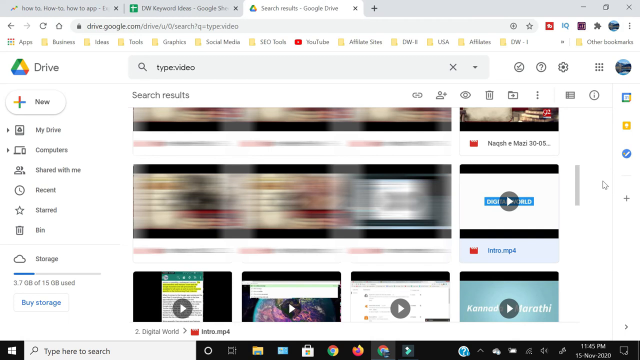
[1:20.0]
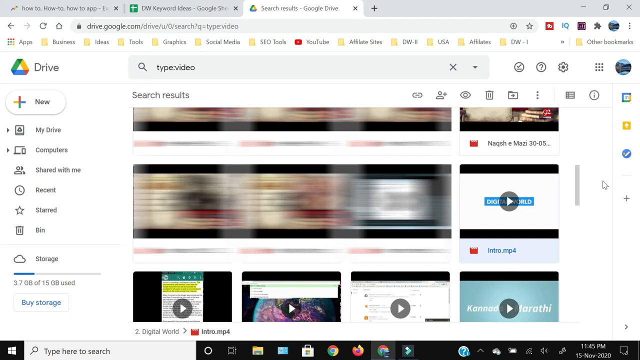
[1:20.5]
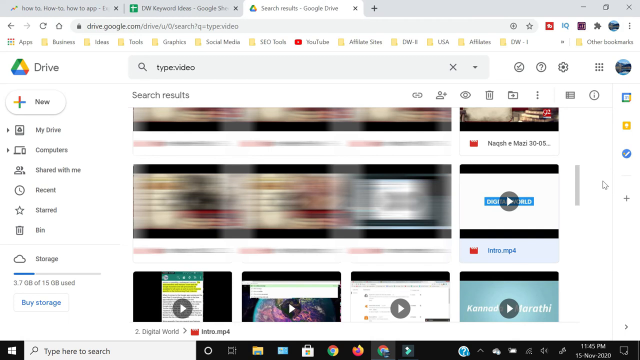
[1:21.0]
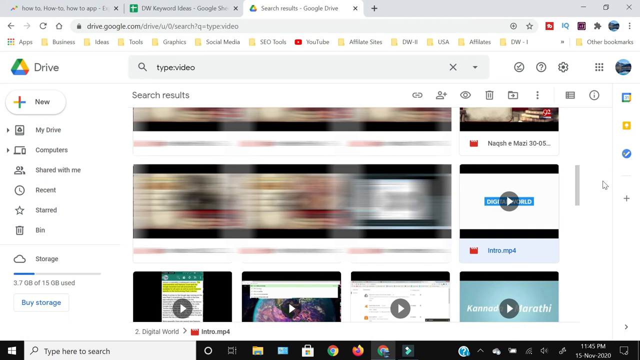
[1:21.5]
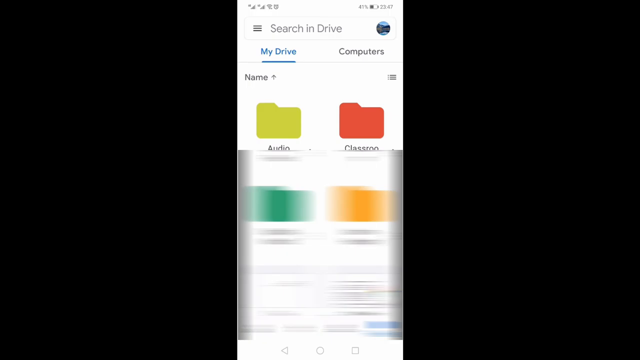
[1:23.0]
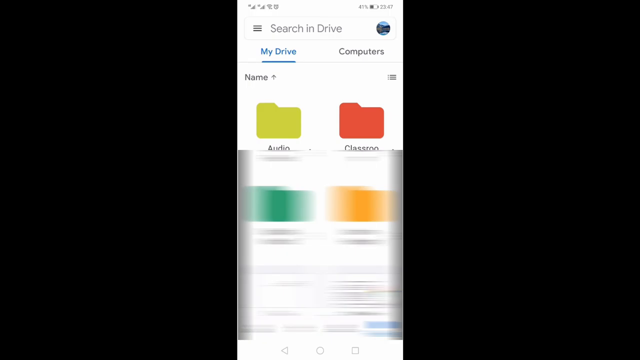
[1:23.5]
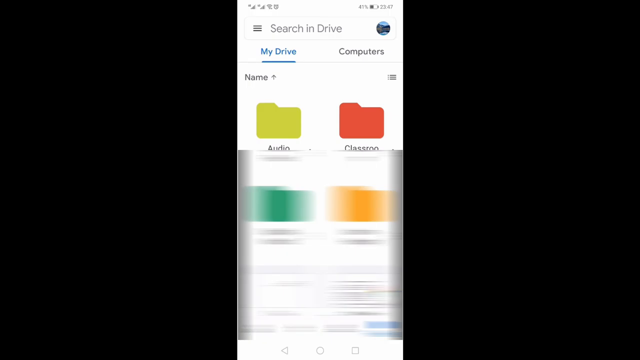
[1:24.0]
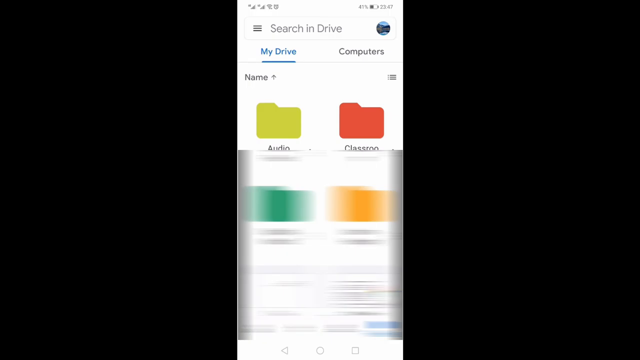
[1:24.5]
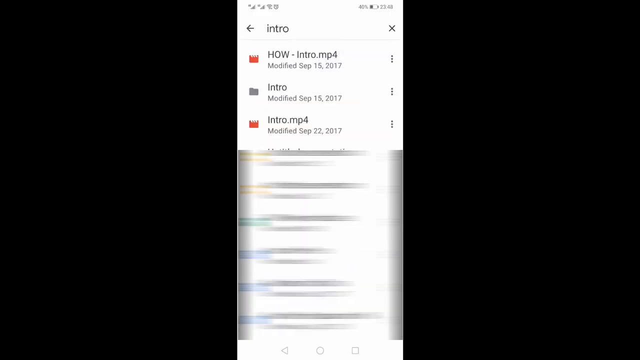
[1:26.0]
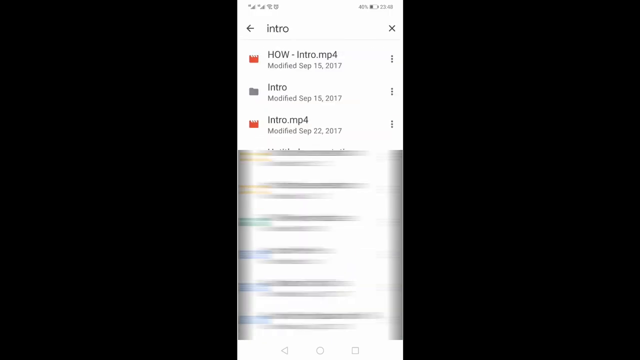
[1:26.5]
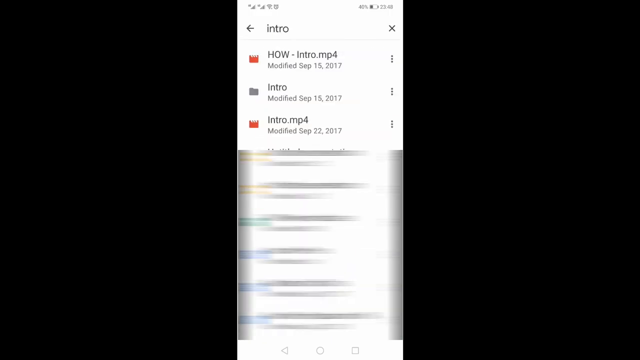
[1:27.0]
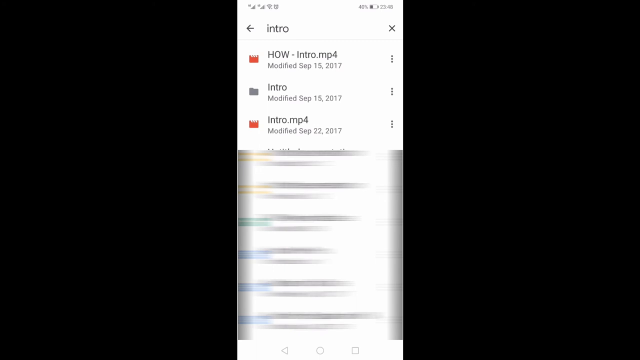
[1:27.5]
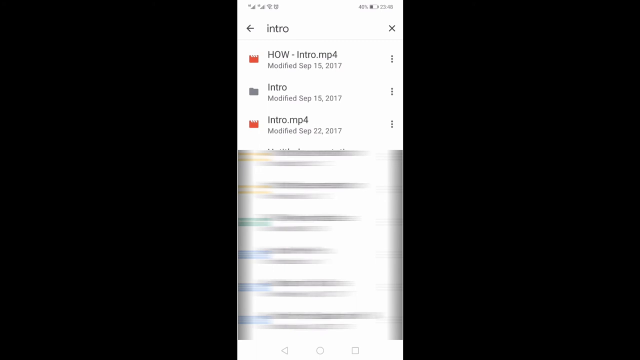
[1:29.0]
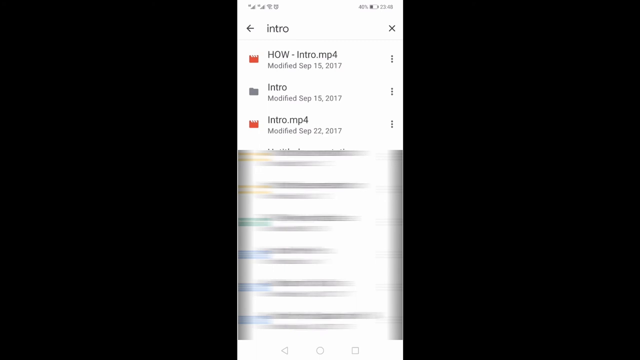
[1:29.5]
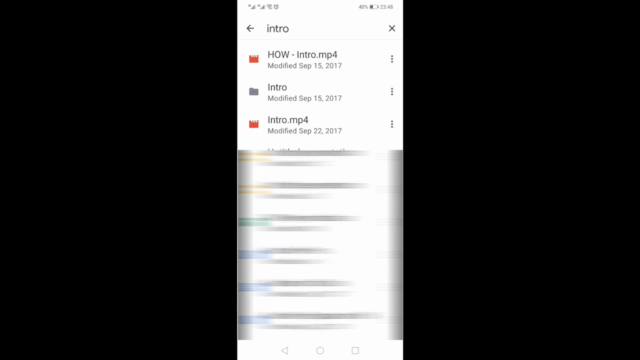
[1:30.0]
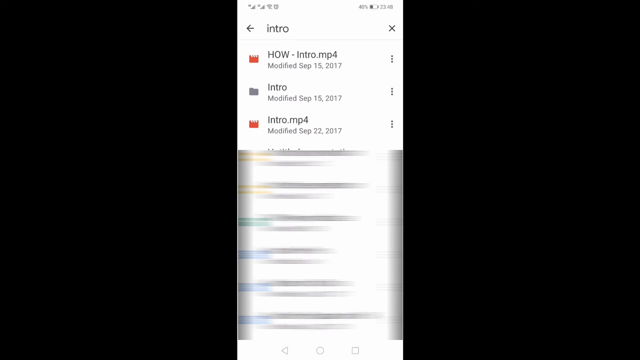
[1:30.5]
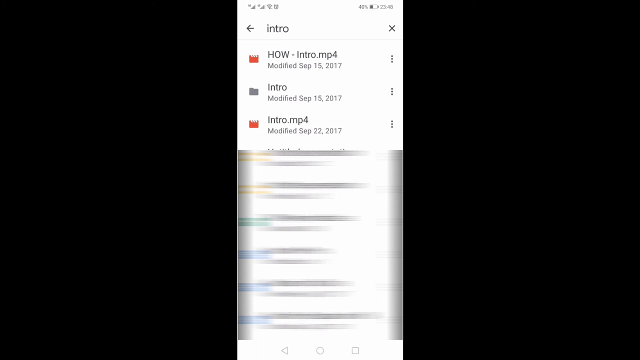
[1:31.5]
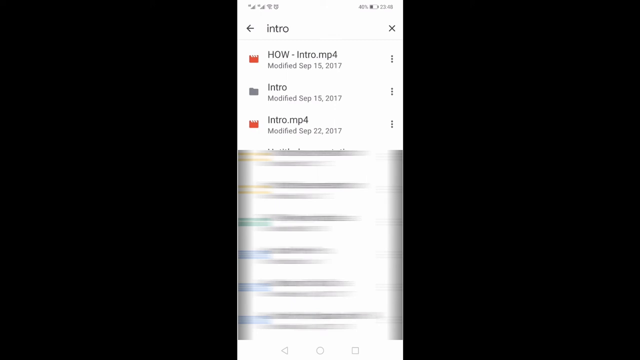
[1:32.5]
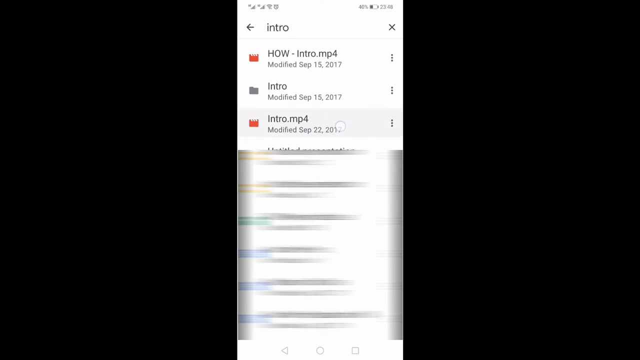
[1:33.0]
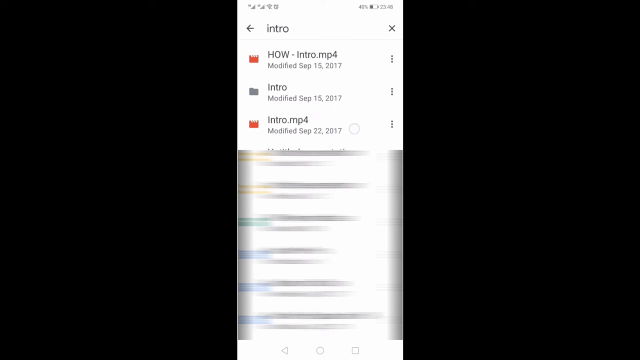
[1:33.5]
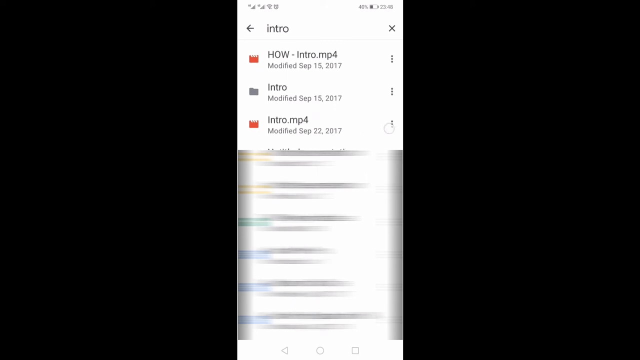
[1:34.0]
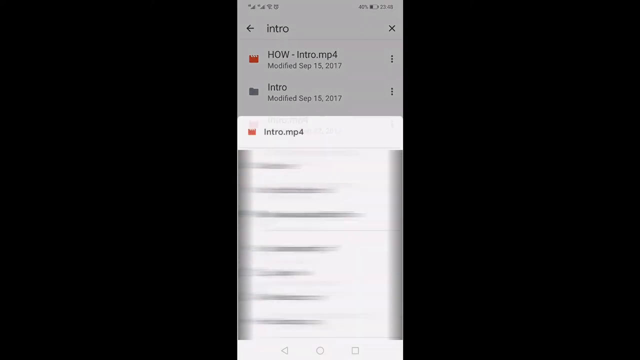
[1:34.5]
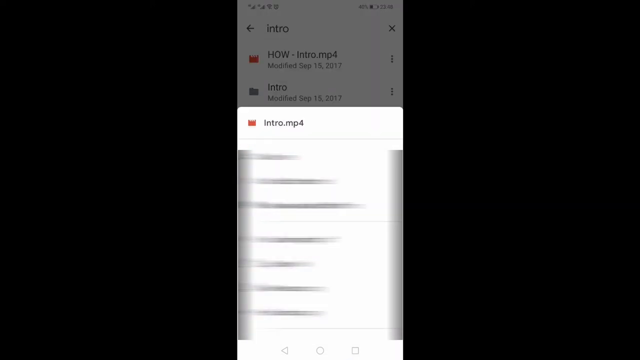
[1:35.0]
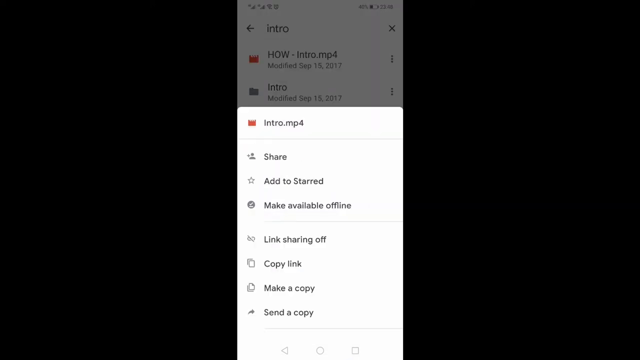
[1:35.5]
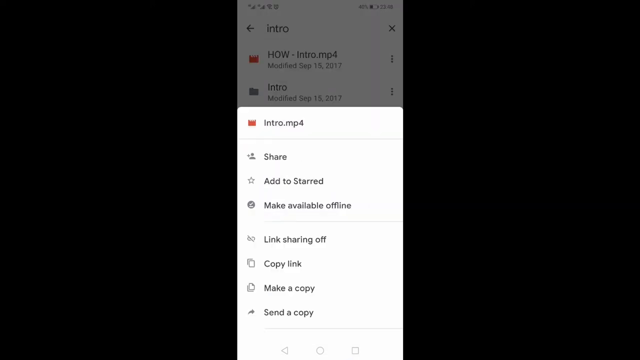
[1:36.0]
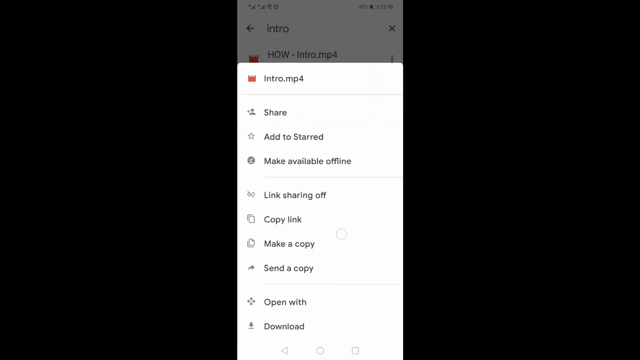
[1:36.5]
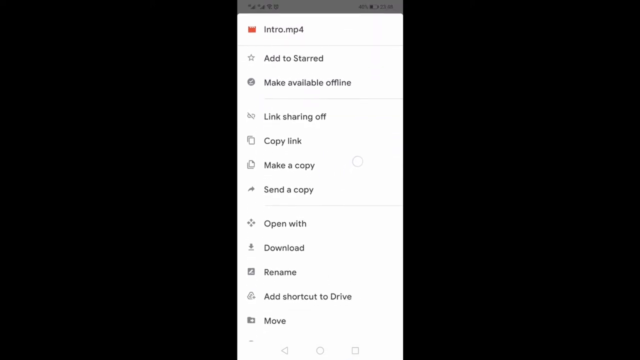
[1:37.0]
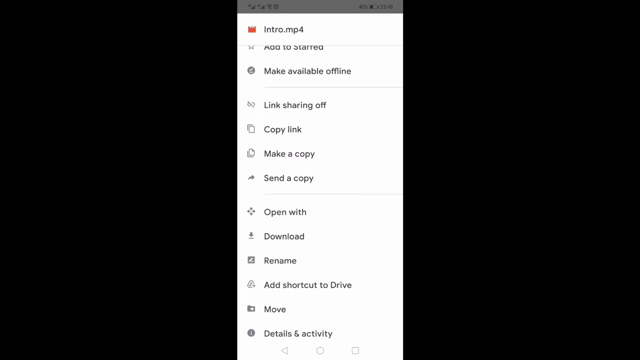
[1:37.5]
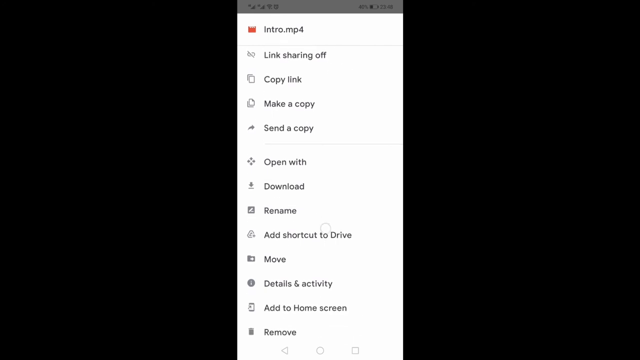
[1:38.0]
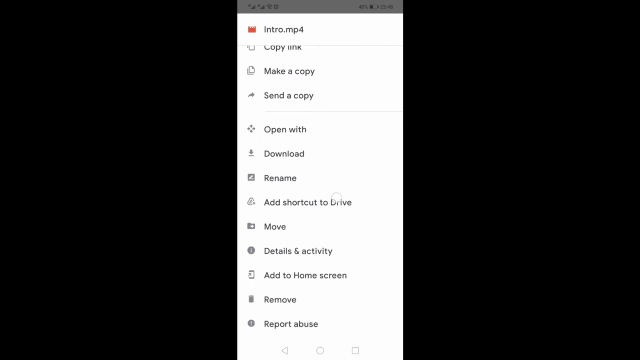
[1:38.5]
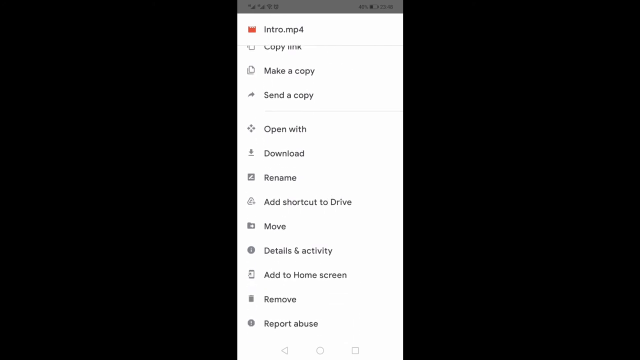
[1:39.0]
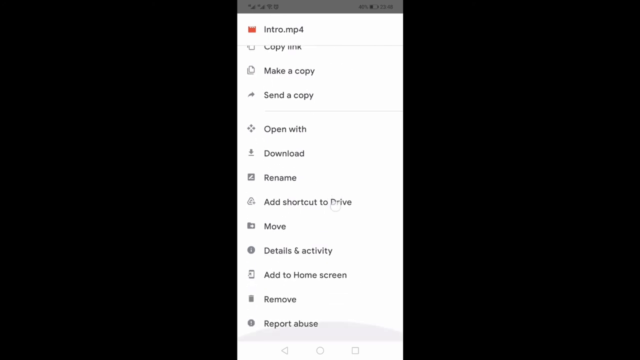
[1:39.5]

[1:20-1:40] A Google Drive page lists many mp3s and mp4s, and some of them are blurred out. The videos include Kannada and Marathi language videos, and apparently one in Urdu. Next, a part of Drive for putting files into folders appears, listing "how to - intro.mp4," "intro," and "intro.mp4," with part of it blurred out. A drop-down menu pops out, the view goes to Google Drive, and the file apparently is about to be put into a folder.